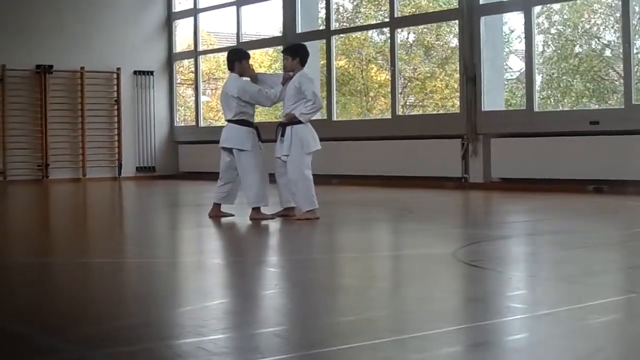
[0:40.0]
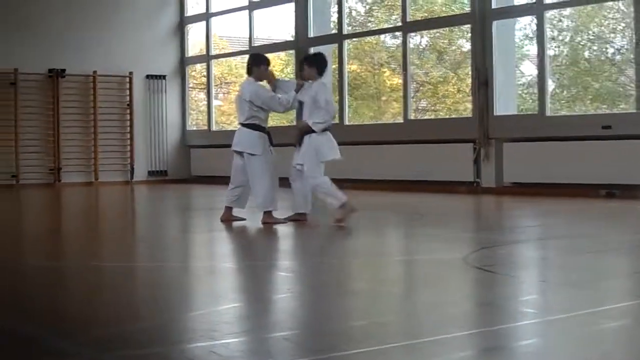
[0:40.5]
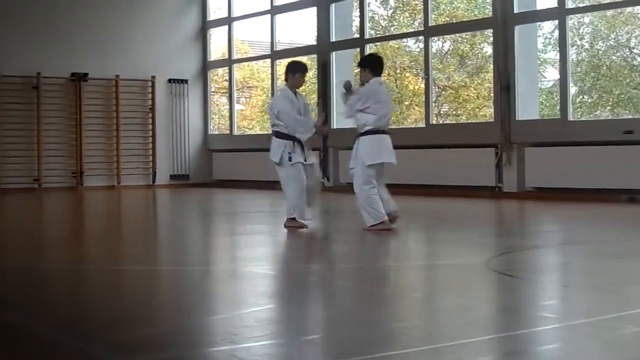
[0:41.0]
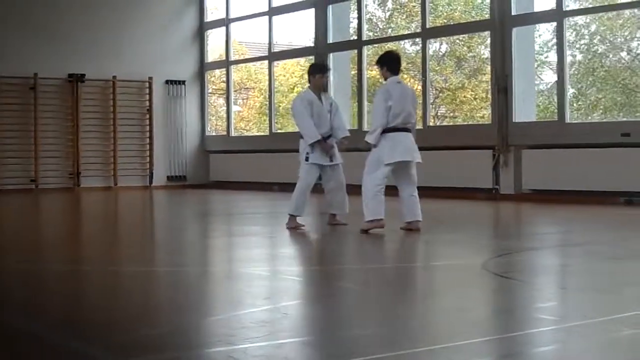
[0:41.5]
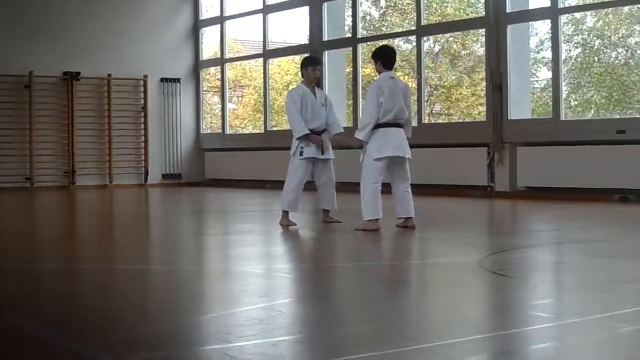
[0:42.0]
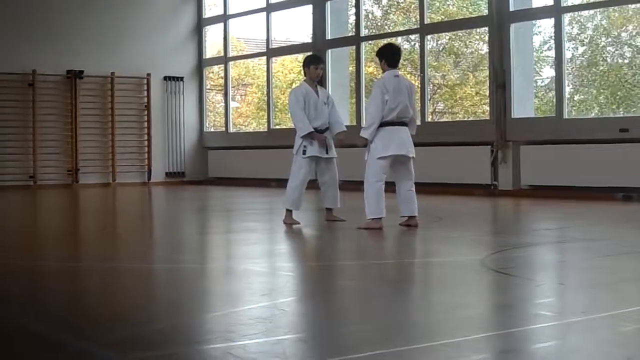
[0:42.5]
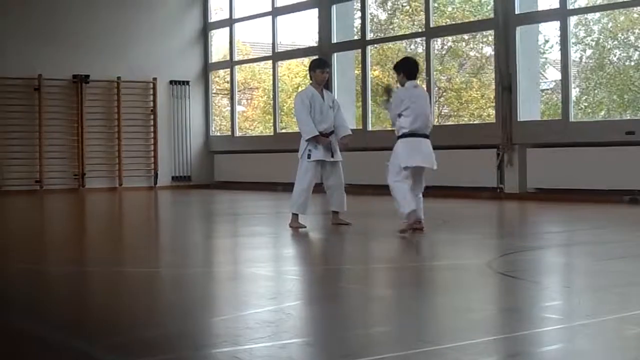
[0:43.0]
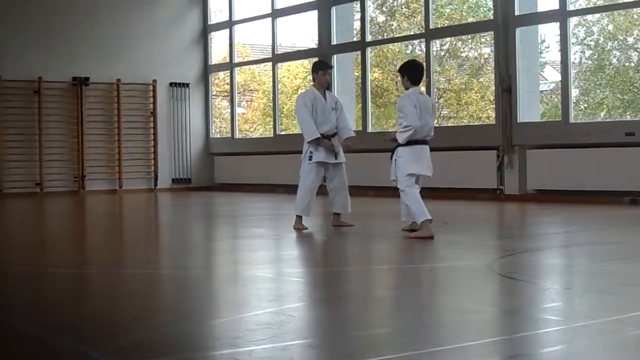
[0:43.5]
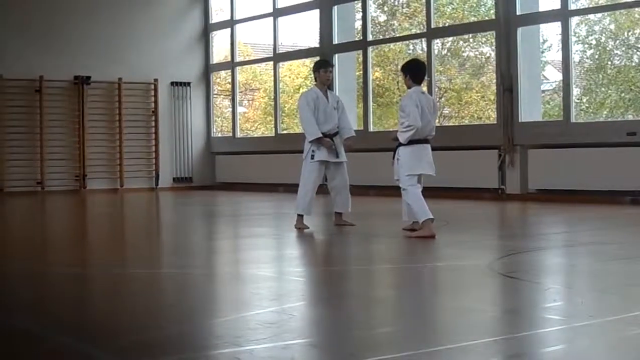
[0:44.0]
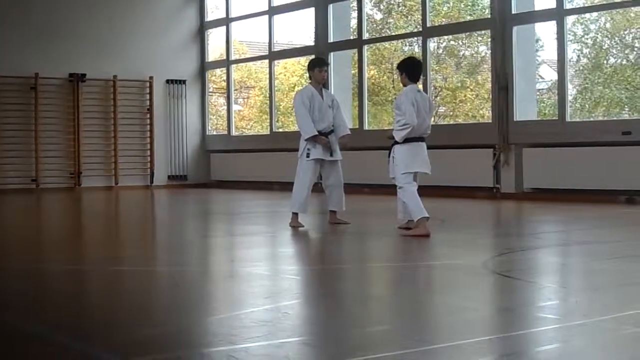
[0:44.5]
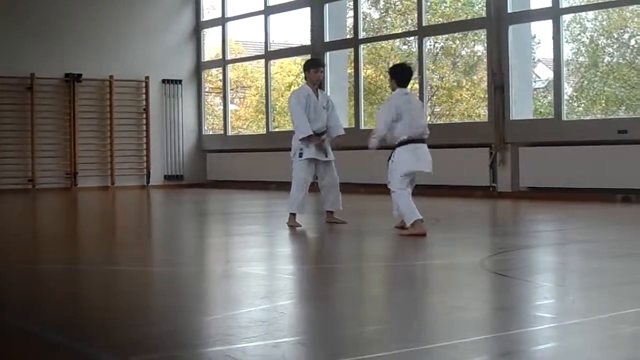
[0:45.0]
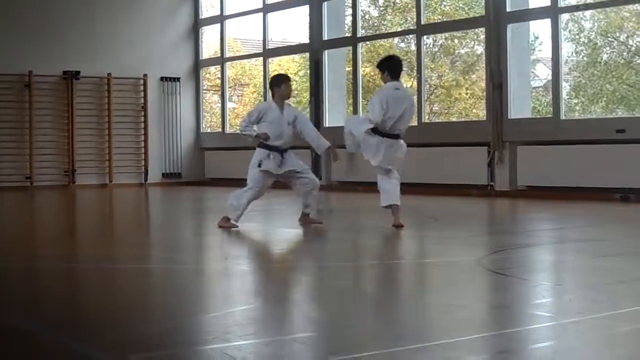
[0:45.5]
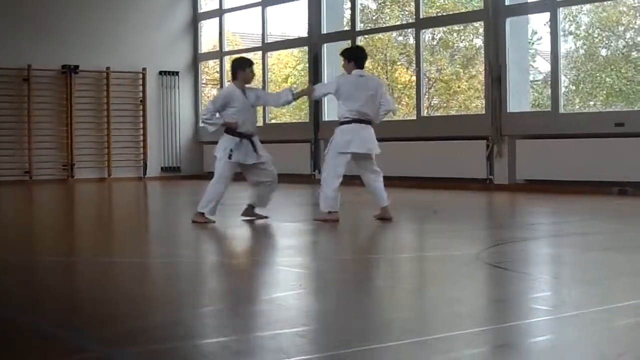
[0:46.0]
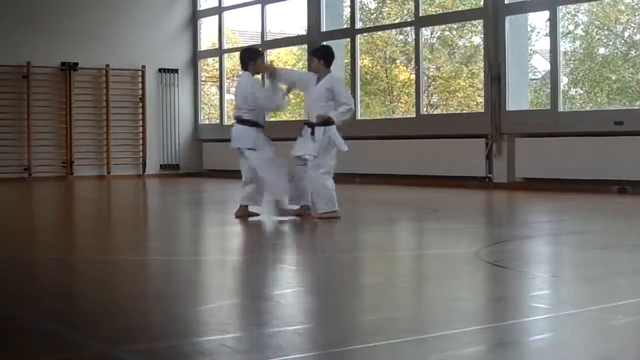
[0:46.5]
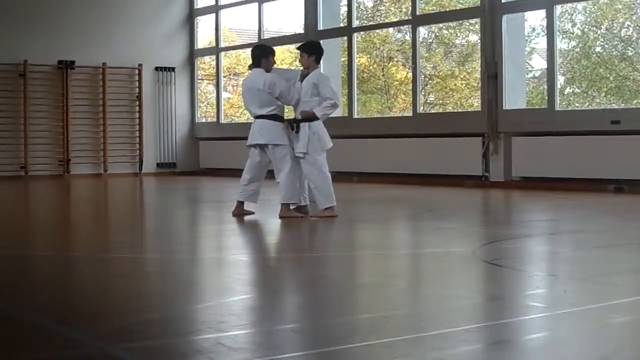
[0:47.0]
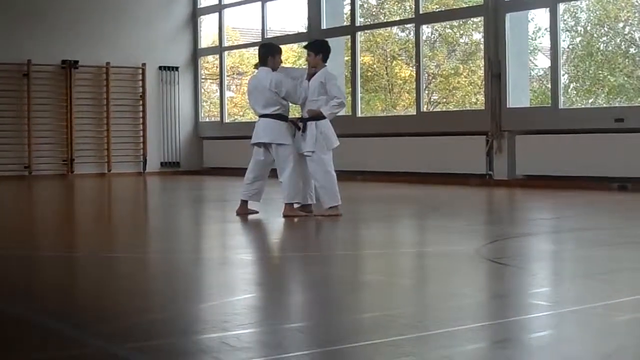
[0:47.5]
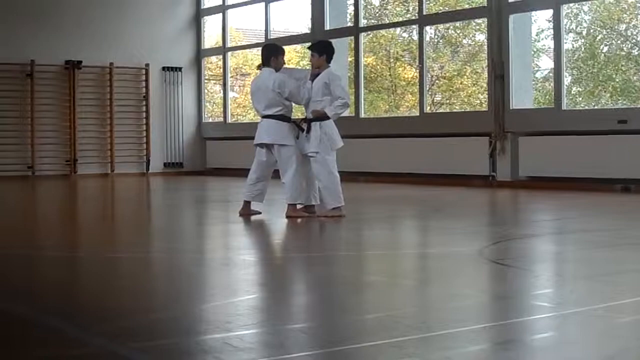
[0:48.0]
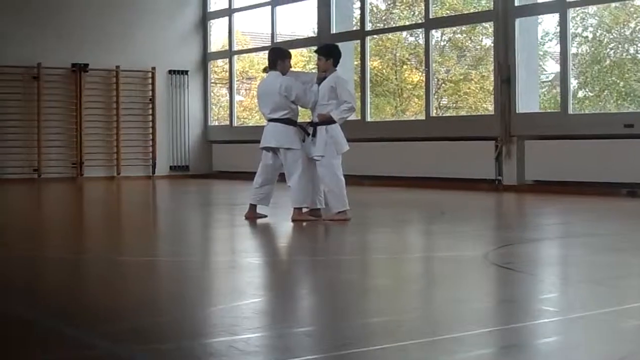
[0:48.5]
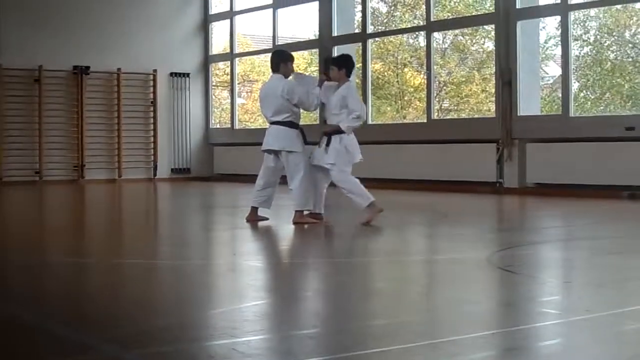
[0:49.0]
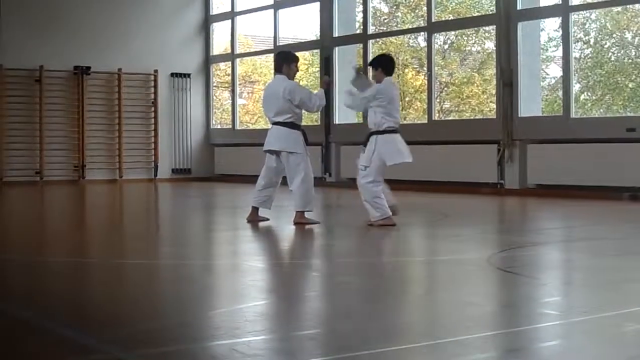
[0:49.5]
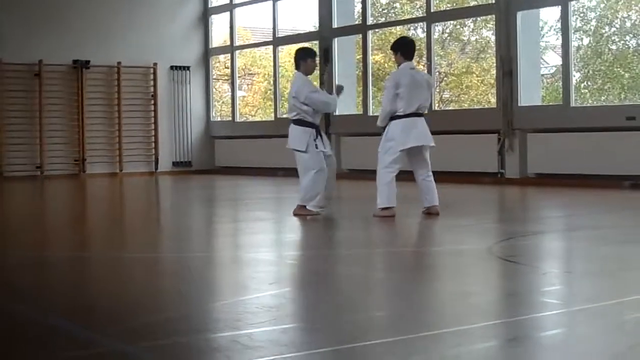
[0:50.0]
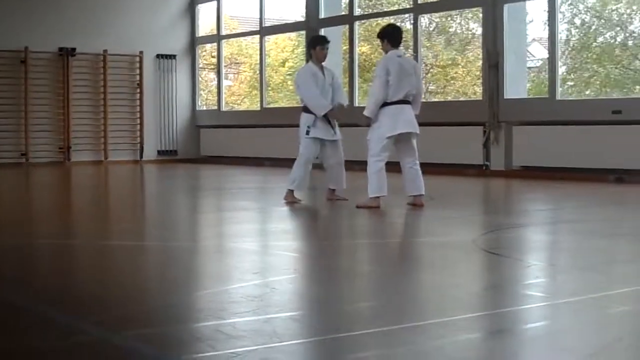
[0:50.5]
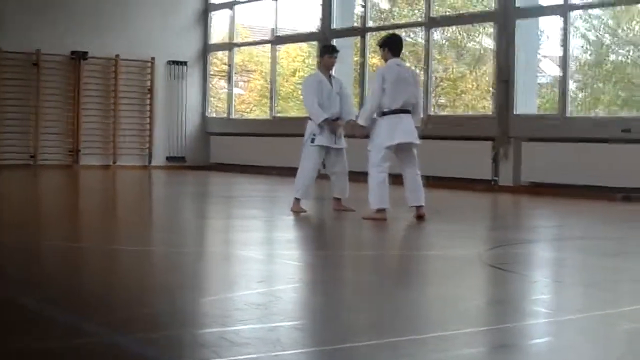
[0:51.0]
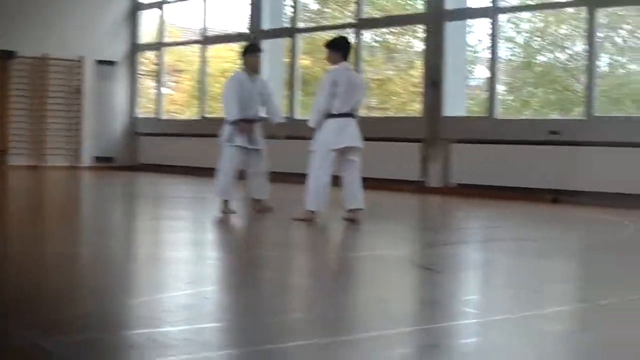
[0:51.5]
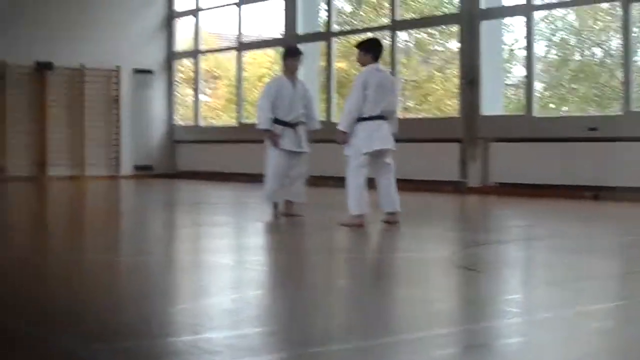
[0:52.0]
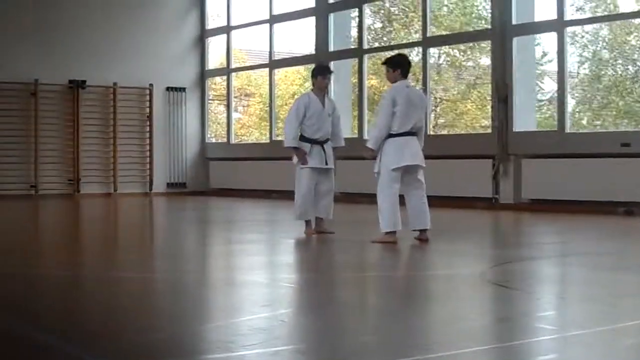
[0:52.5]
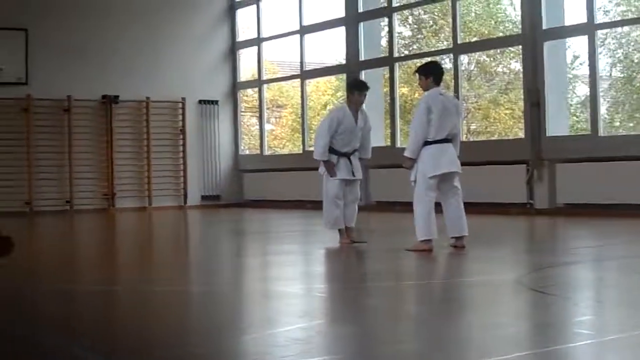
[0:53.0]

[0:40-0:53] The setting is the same karate dojo, with a brown wooden floor and white walls. A large windowed area runs across the top right of the screen with some trees poking in, green with some yellow leaves. The sky is bright white, showing that it is daytime. The two boys in the middle both wear white outfits and black belts and have short black hair. The boy on the right appears to slowly do moves before returning to the previous position. They get ready, the boy on the right prepares, and he goes a little faster this time, doing a left kick that the other boy dodges, then throwing punches while the boy on the left performs counter moves to protect himself from the attacks.